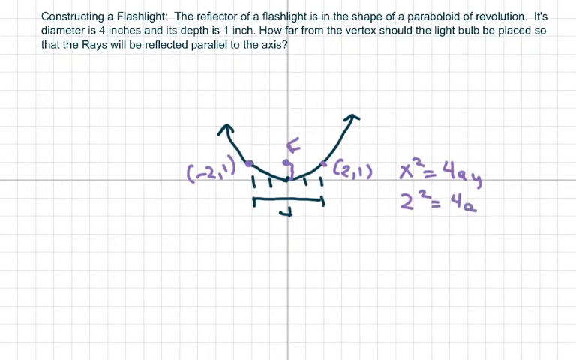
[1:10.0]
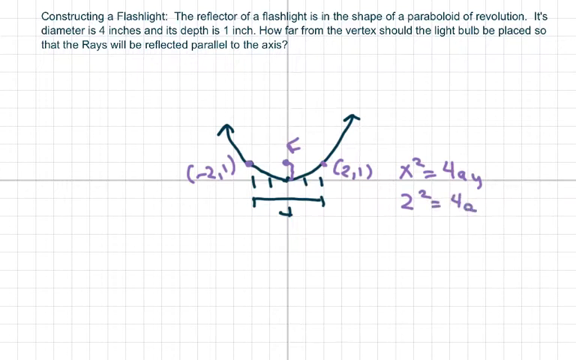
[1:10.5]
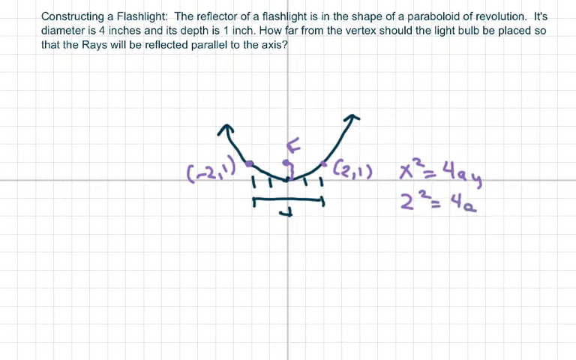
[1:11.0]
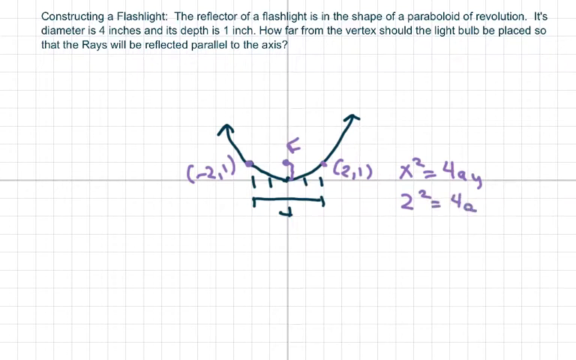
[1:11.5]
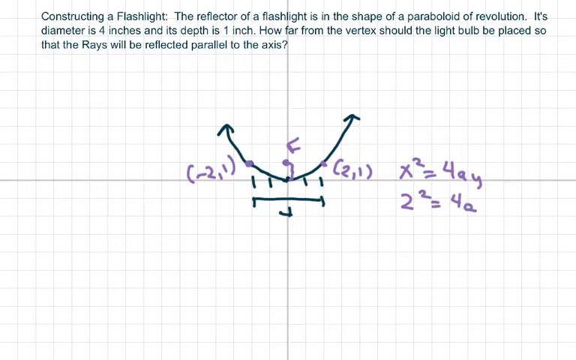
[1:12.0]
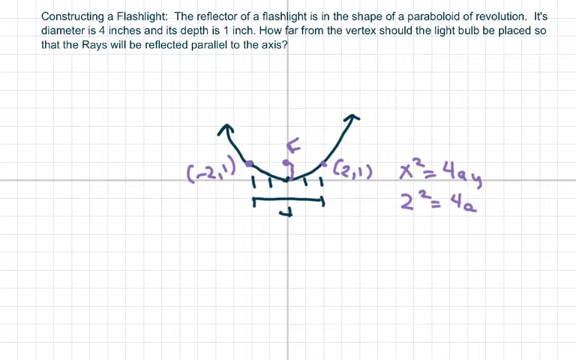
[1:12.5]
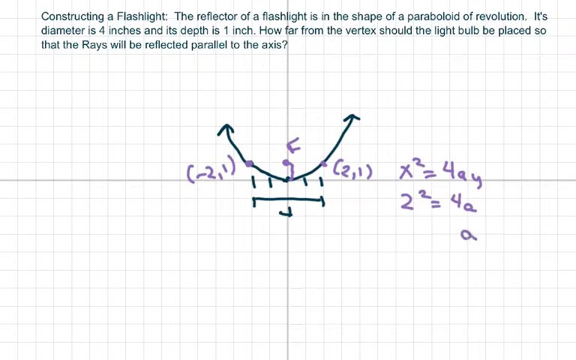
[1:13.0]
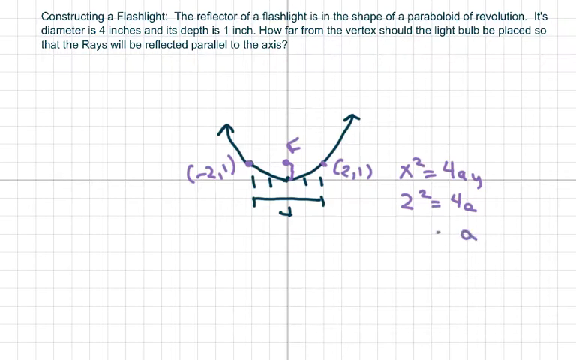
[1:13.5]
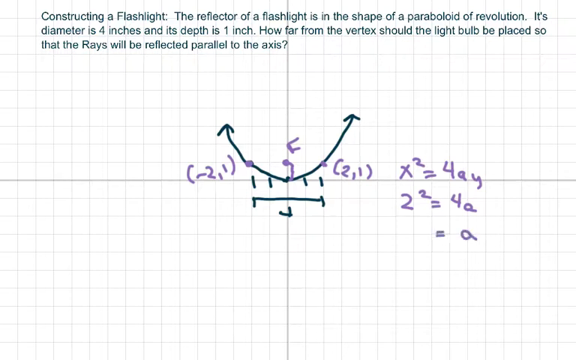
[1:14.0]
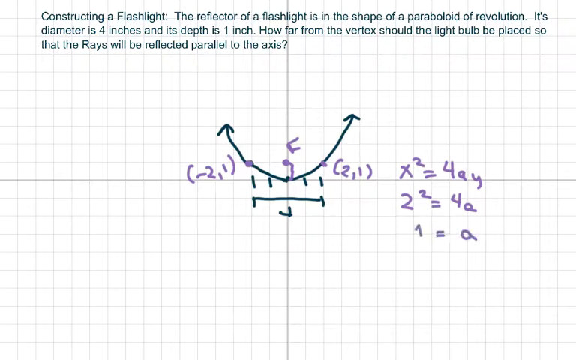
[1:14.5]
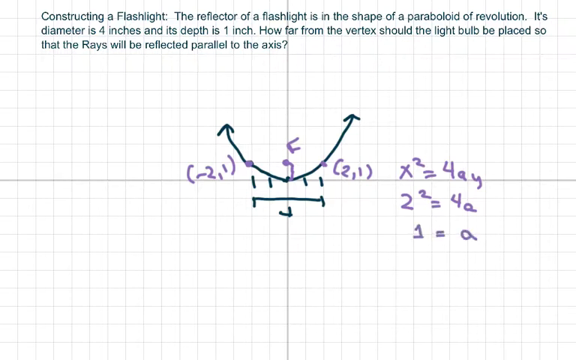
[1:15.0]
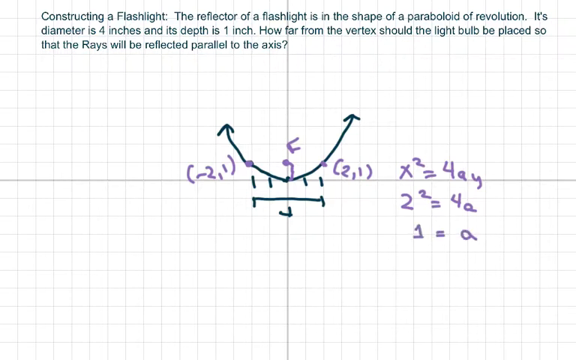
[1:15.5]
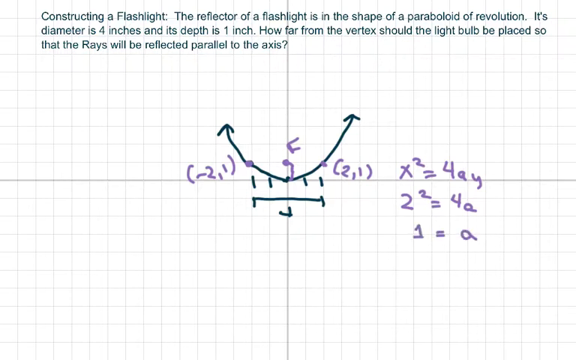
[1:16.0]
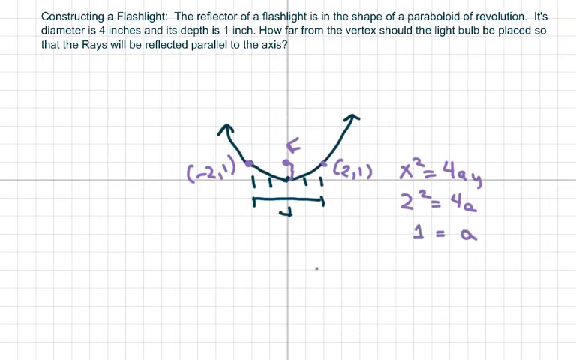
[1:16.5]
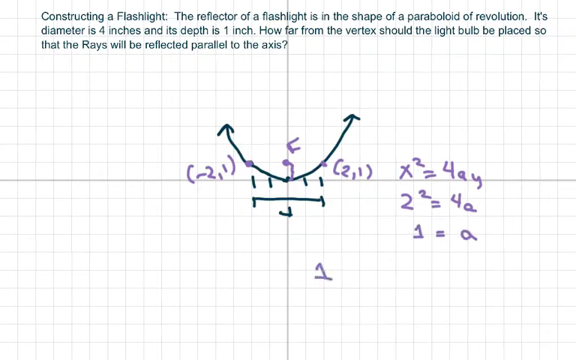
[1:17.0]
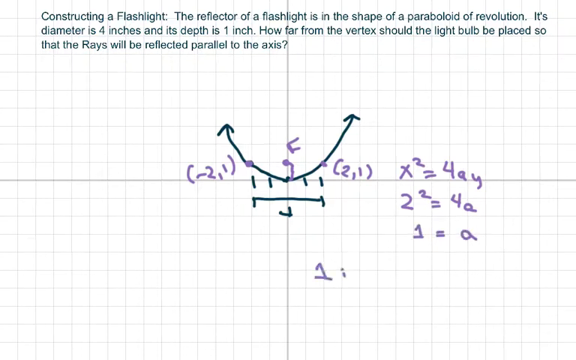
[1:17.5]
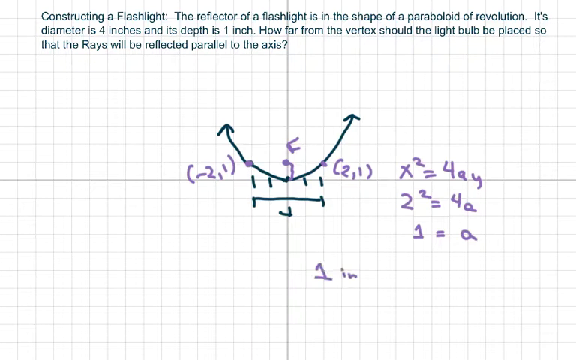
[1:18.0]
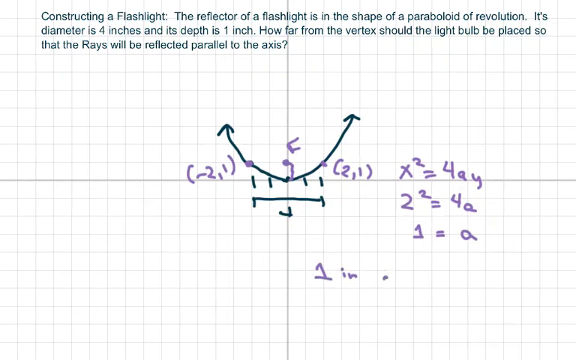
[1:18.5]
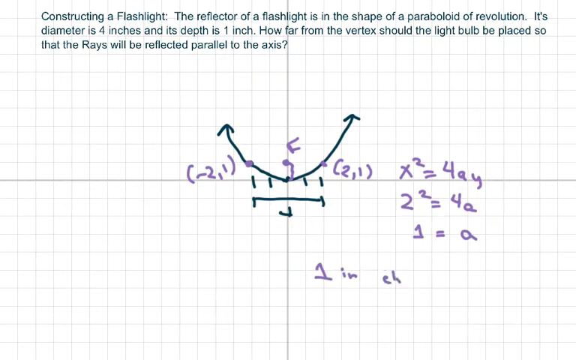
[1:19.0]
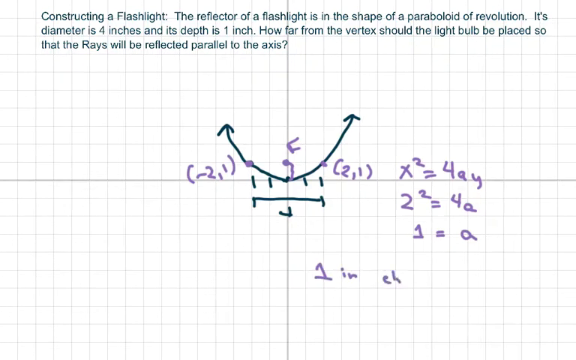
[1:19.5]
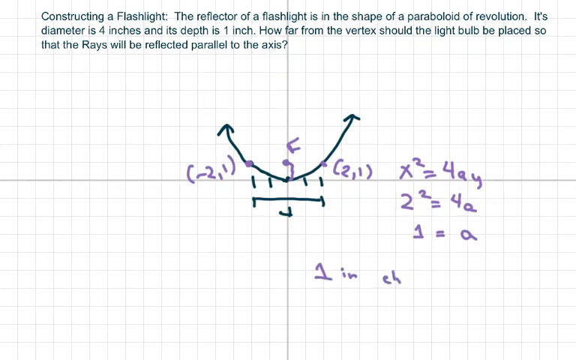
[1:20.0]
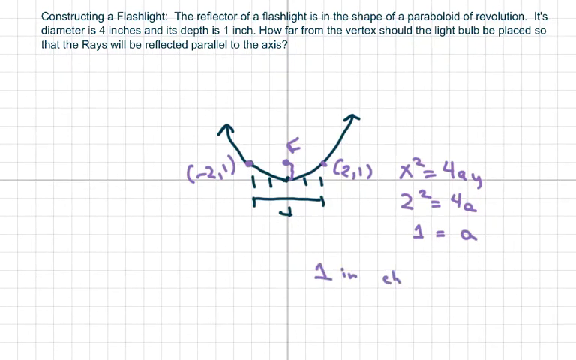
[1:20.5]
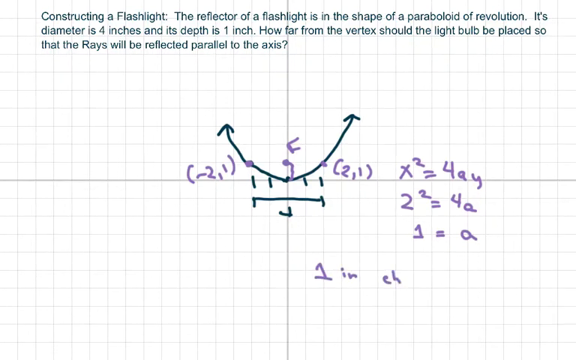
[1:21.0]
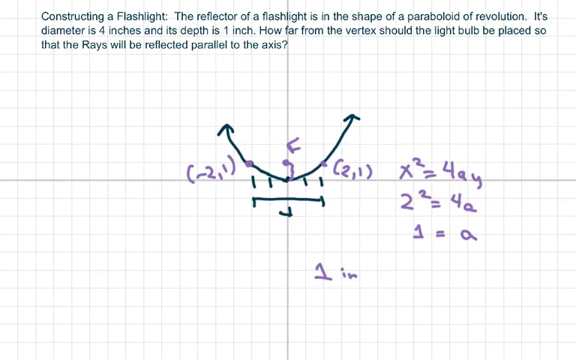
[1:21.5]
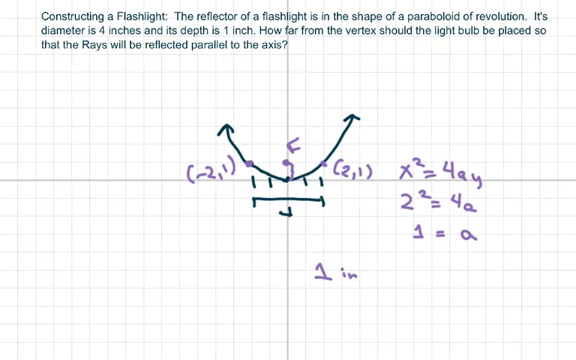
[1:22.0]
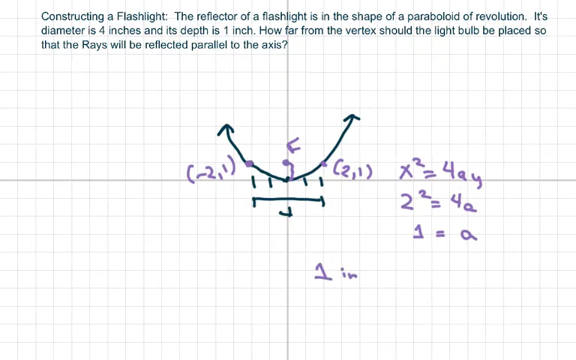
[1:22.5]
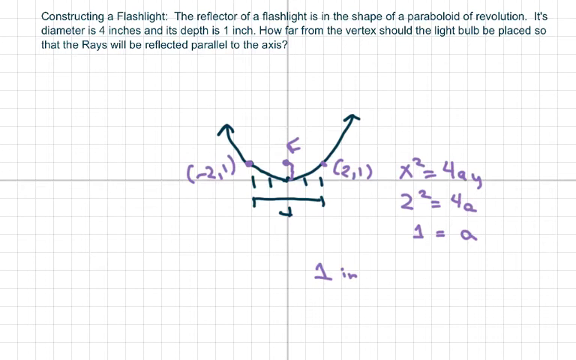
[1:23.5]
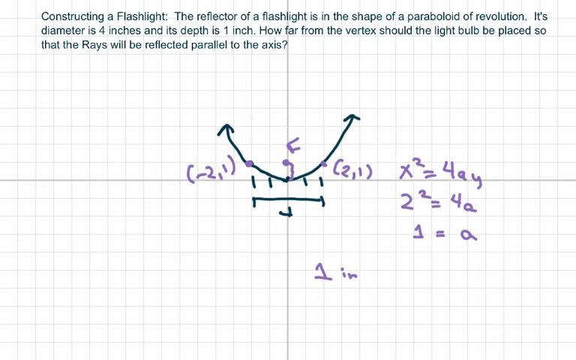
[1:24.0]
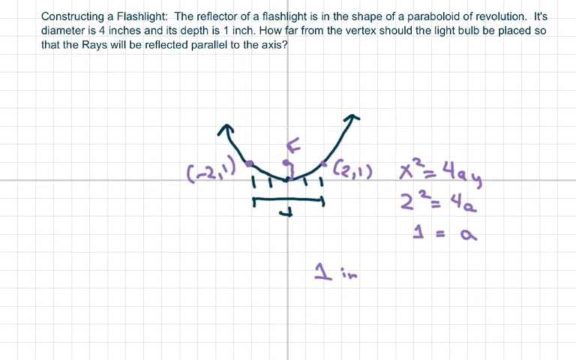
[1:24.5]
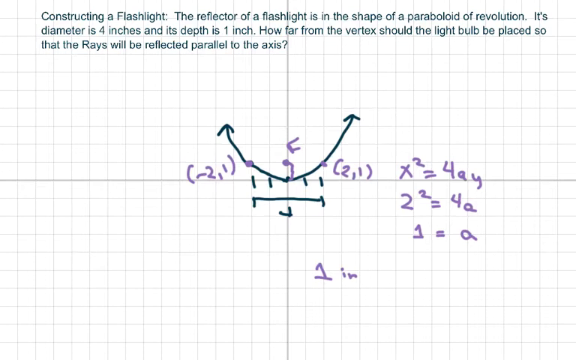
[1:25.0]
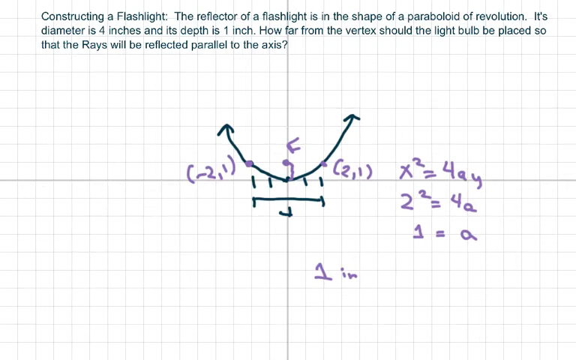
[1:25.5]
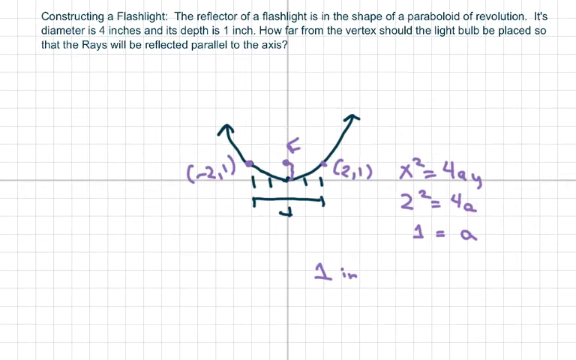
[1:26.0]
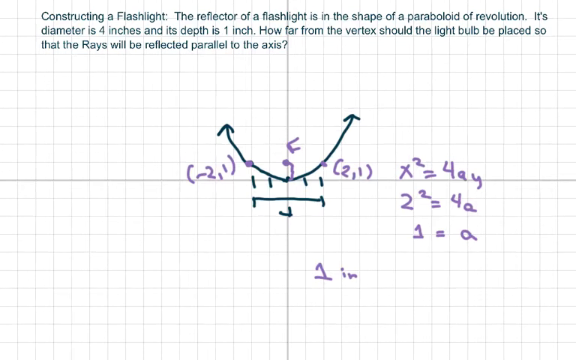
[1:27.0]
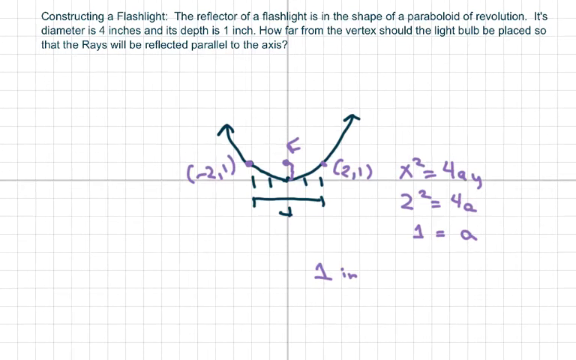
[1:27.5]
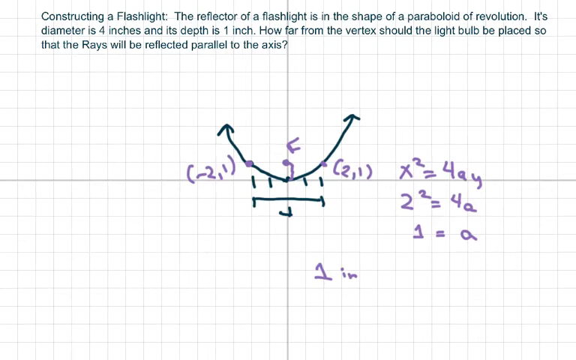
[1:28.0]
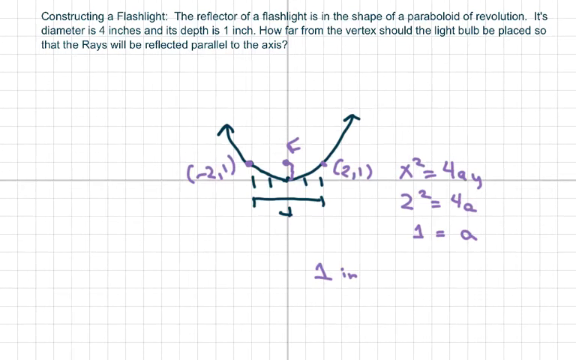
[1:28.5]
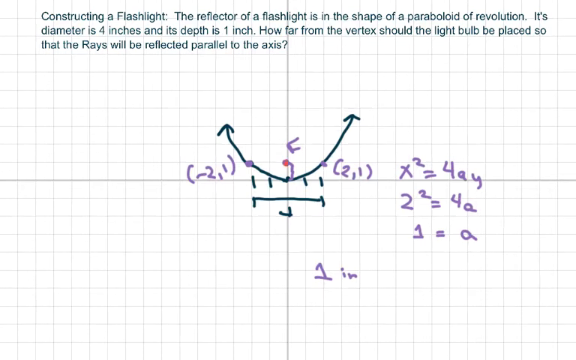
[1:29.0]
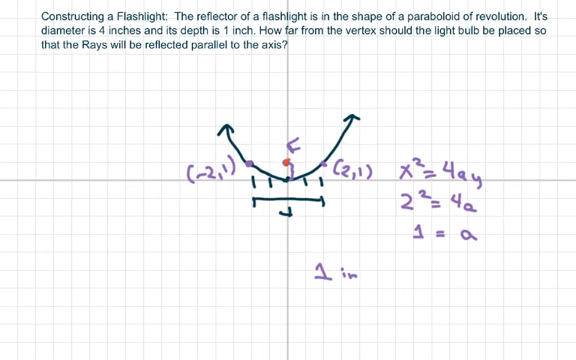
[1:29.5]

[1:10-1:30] Down below, the person writes A, then an equals sign, then 1, forming A = 1. In the lower right box, "1 in CH" is written, and then the CH is wiped away. A red dot appears up inside the smiley-shaped line with an arrow on the left and an arrow on the right.